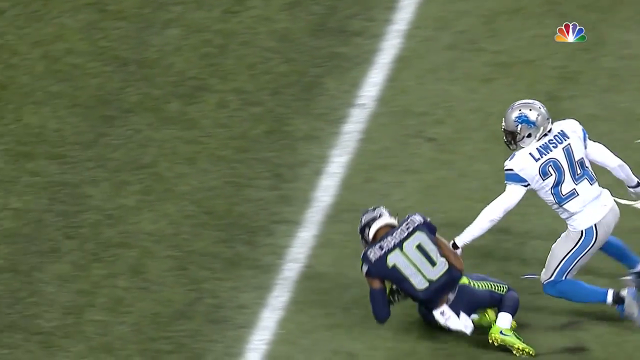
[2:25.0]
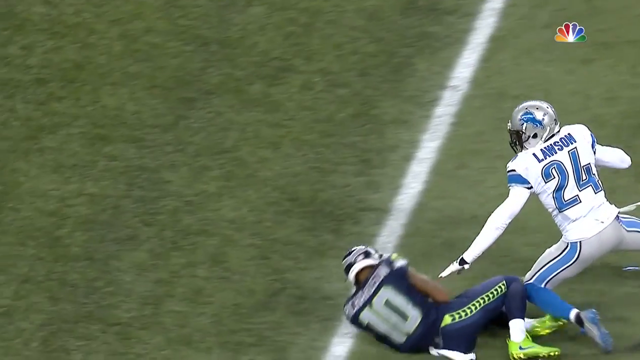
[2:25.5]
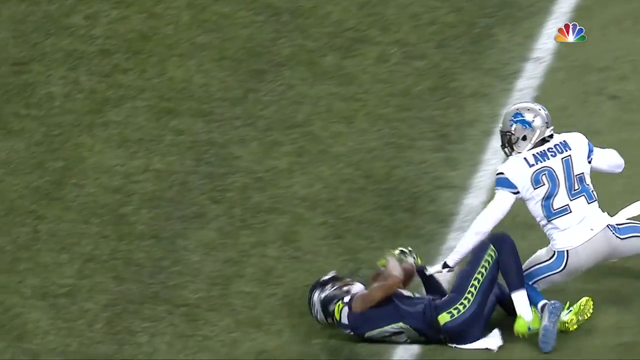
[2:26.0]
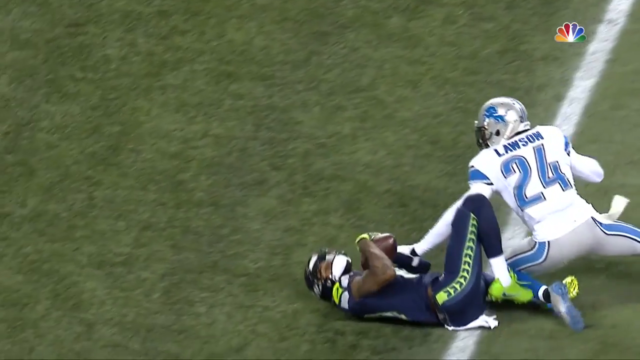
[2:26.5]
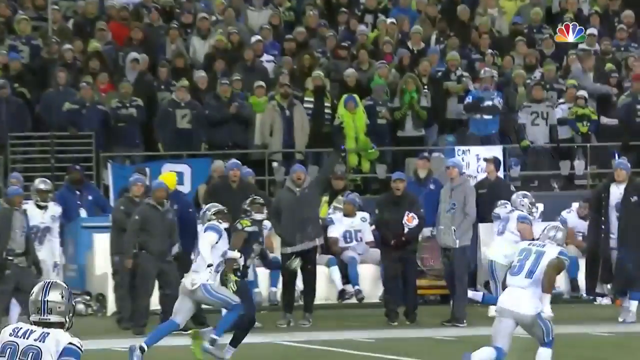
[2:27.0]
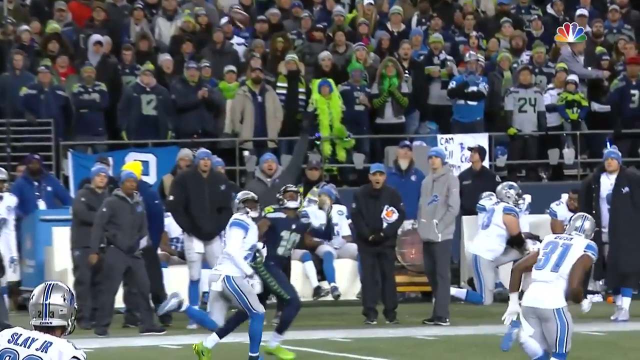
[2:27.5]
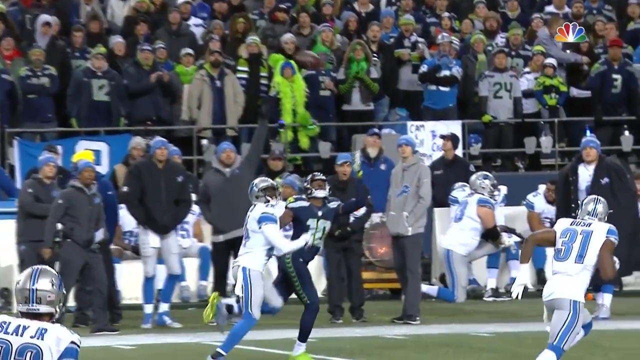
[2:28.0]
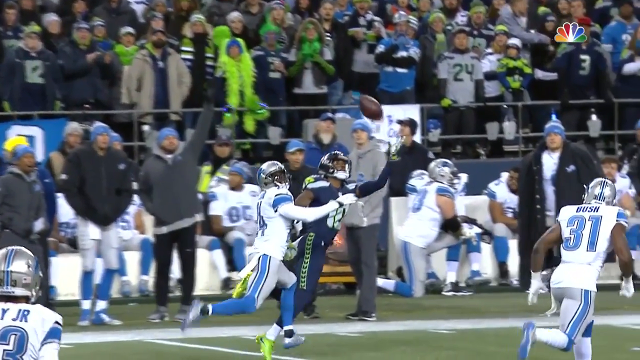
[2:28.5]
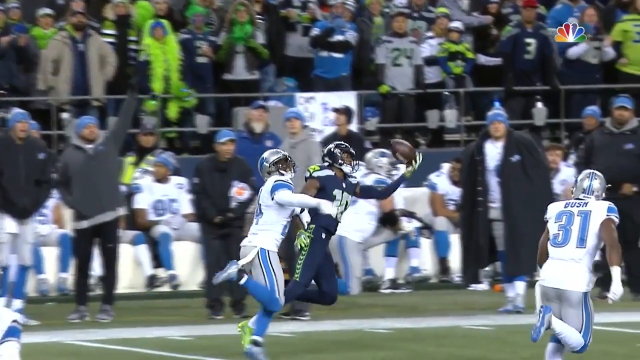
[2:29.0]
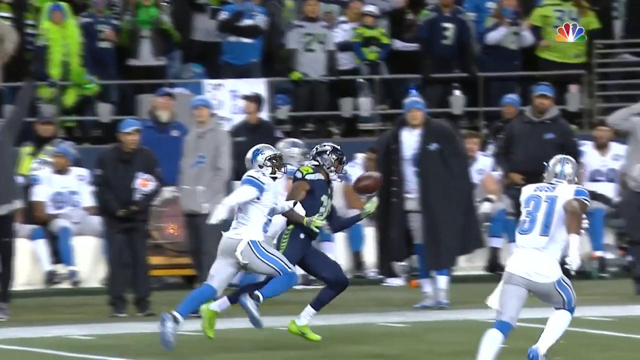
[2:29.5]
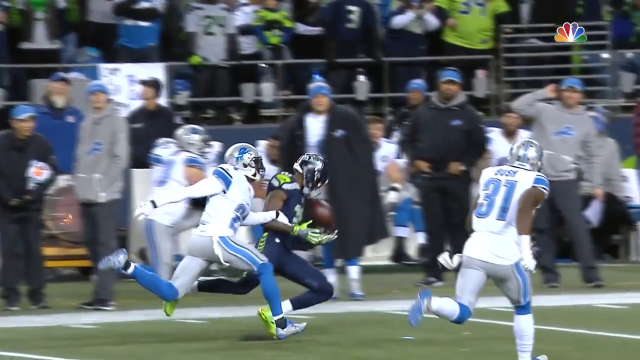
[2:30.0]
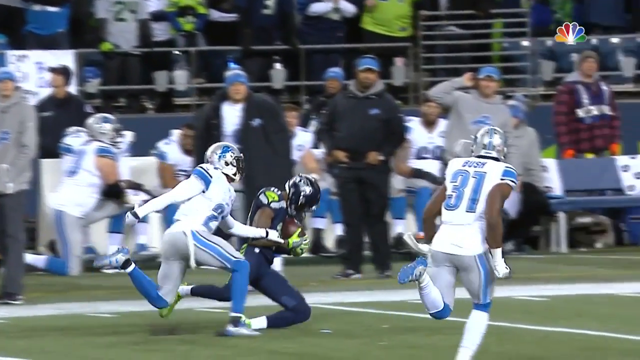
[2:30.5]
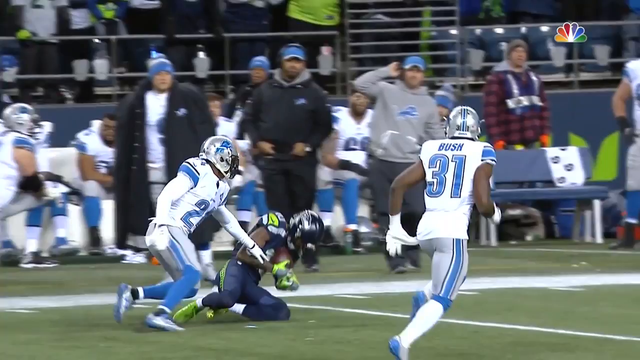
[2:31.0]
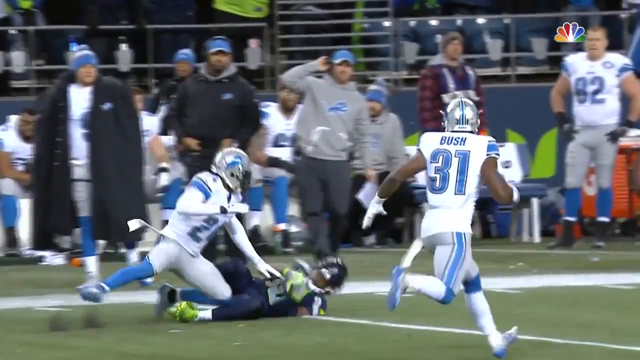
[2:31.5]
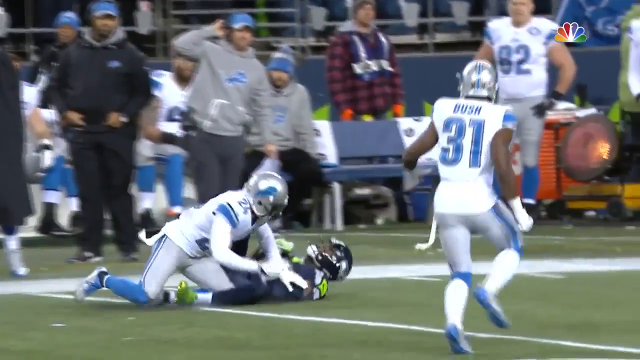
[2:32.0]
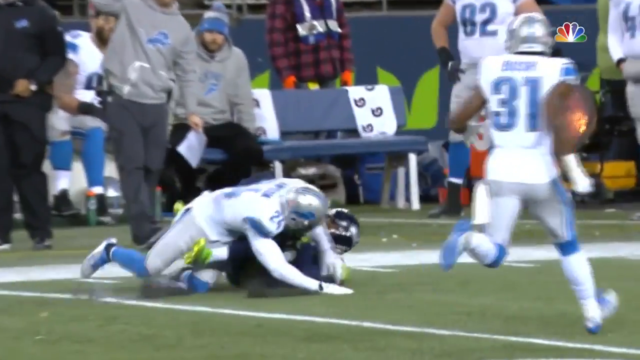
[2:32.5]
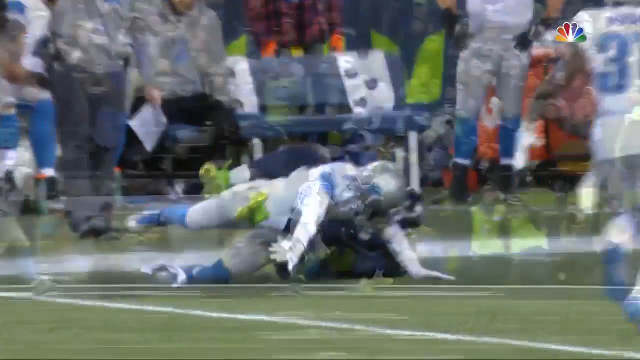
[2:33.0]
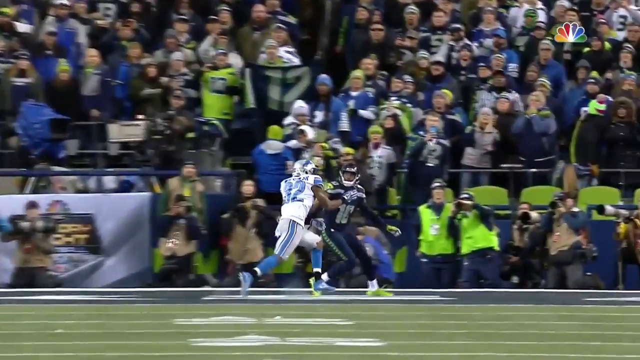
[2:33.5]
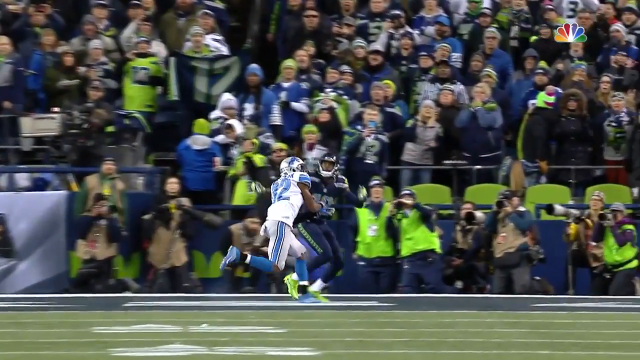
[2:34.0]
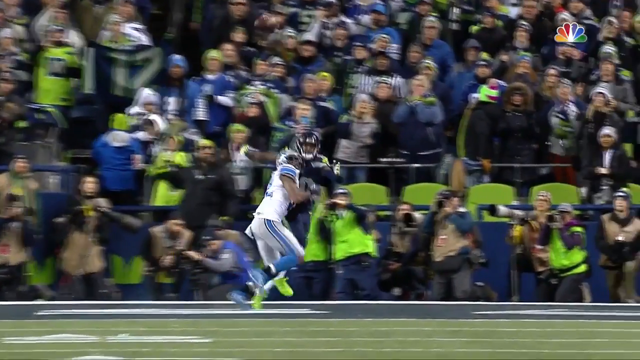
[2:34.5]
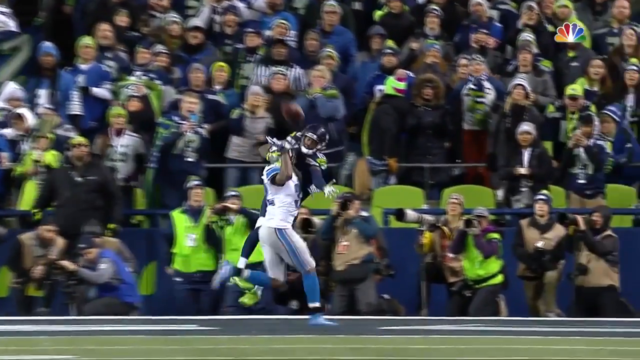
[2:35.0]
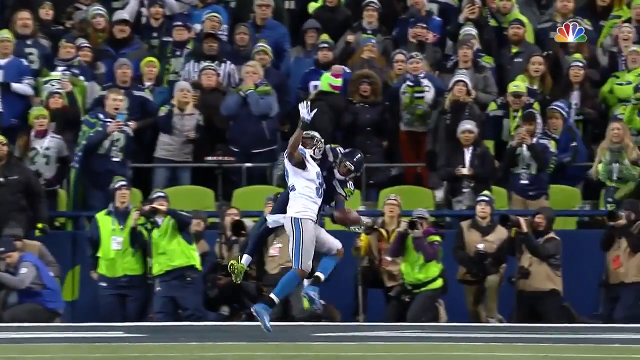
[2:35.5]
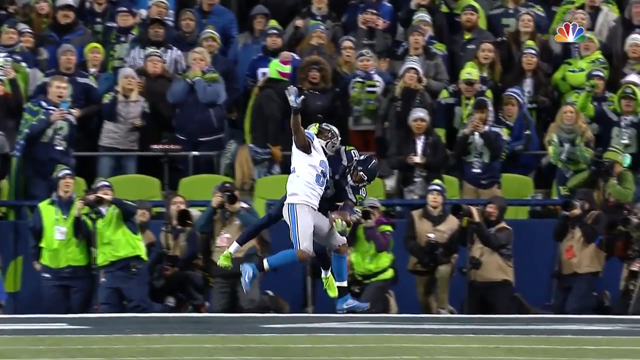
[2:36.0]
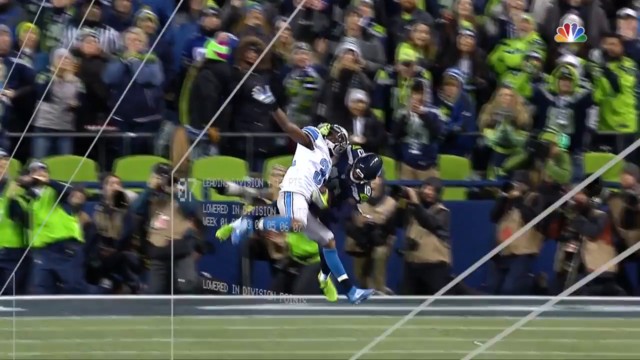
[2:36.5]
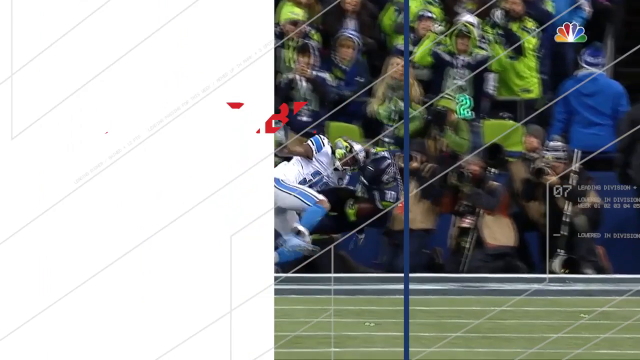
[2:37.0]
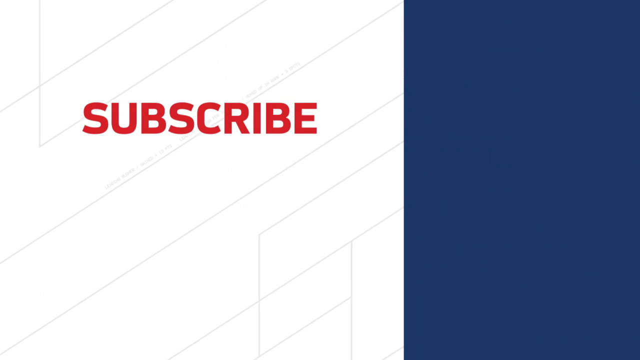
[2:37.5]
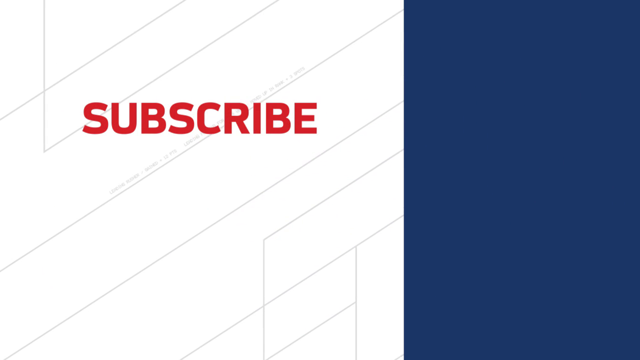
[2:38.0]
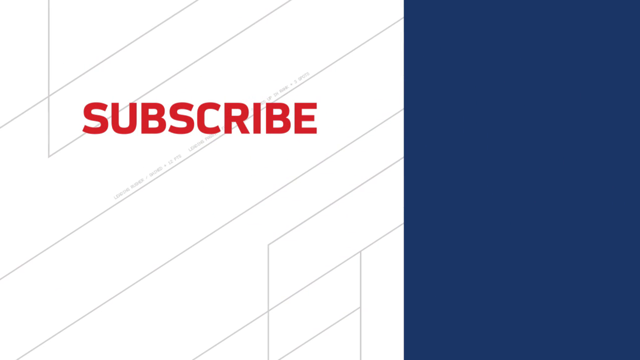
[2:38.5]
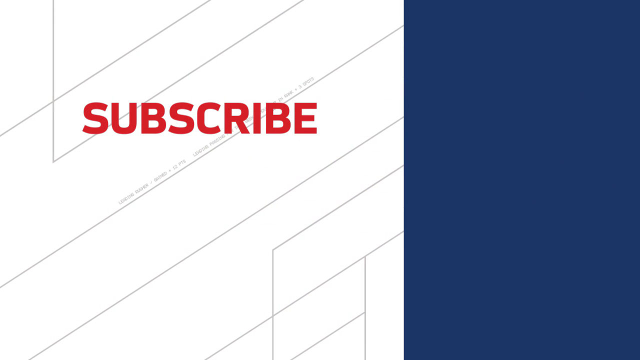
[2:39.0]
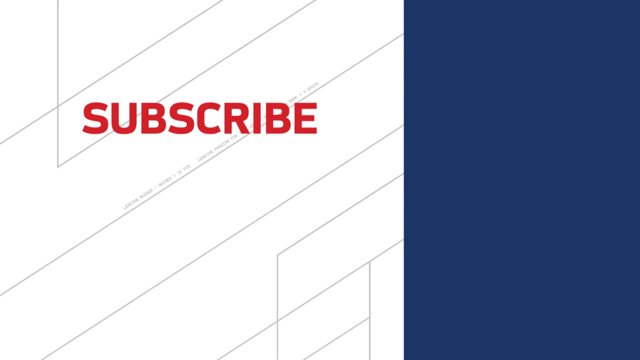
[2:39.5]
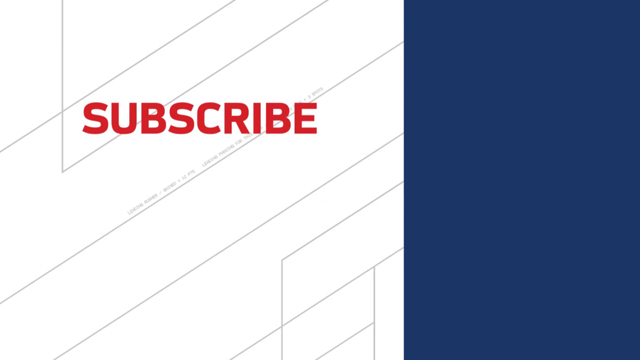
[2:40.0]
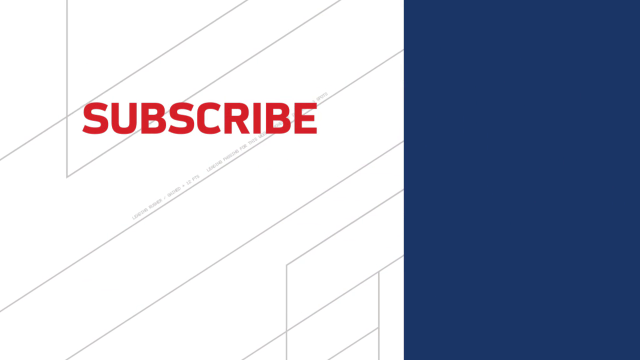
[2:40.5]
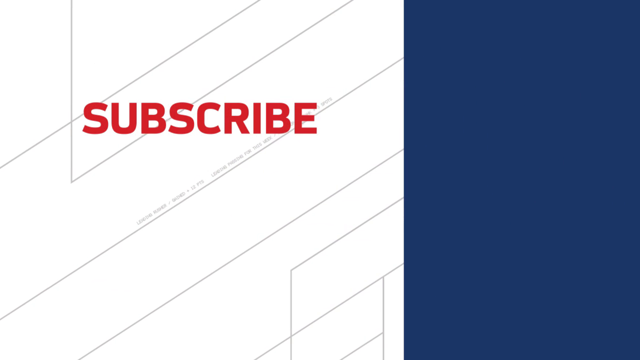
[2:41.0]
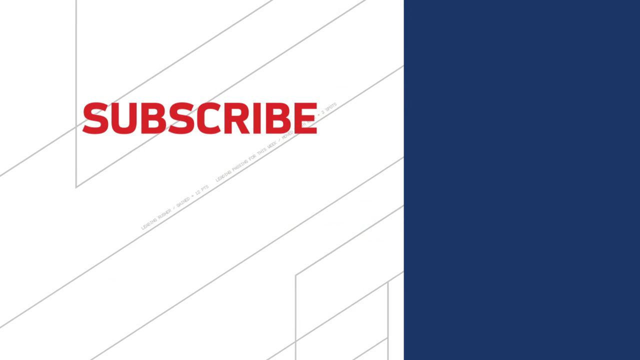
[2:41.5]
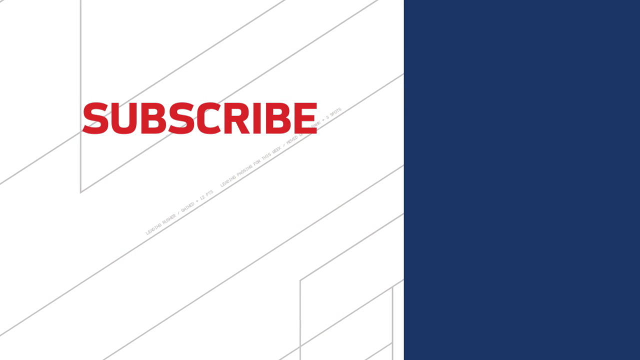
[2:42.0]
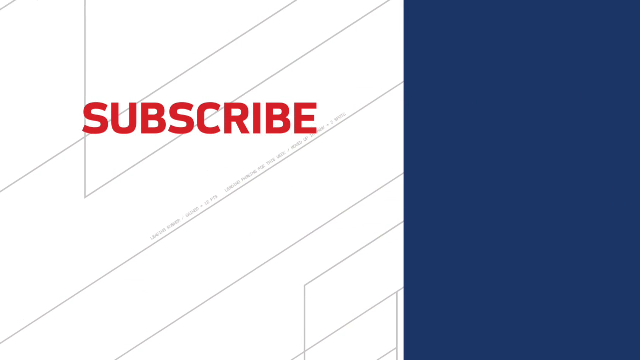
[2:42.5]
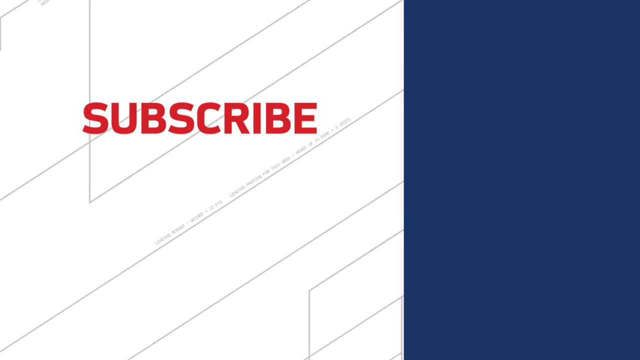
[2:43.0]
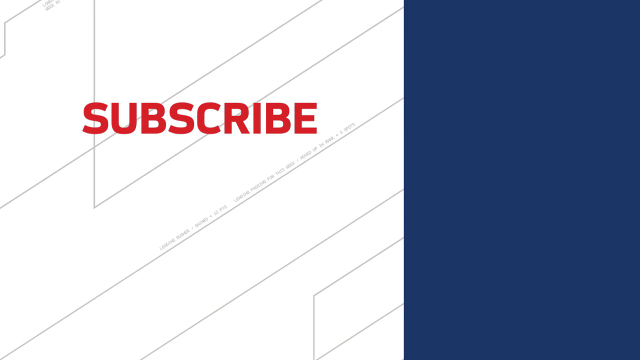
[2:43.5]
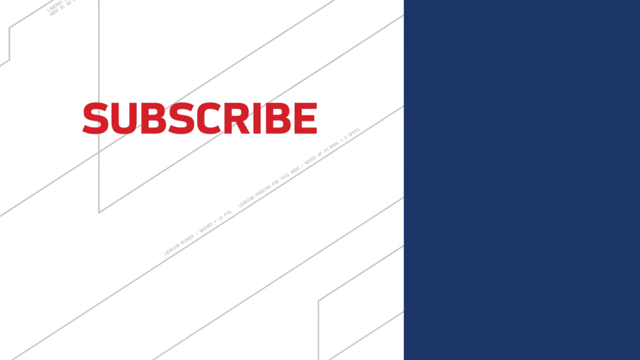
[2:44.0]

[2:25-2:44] Richardson, Seahawks number 10, falls to the ground after completing the catch, as does the Lions cornerback, number 24, who tried to guard him but lost him. Another, more zoomed-out replay angle shows the Lions sideline and the first row of the stadium as Richardson makes the catch, slowly with one hand, secures it with both hands, and falls onto the green turf. Another angle shows the play from the front. A split screen follows: on the left is a white background with gray diagonal lines, red text reading "subscribe," and an NFL logo below it; on the right is a dark navy blue background. The lines on the left side slowly start to move downward, and the video ends.